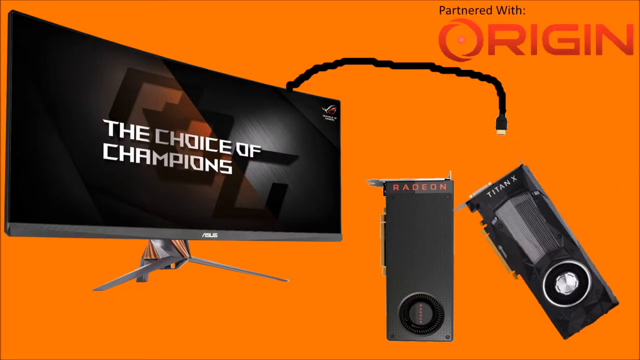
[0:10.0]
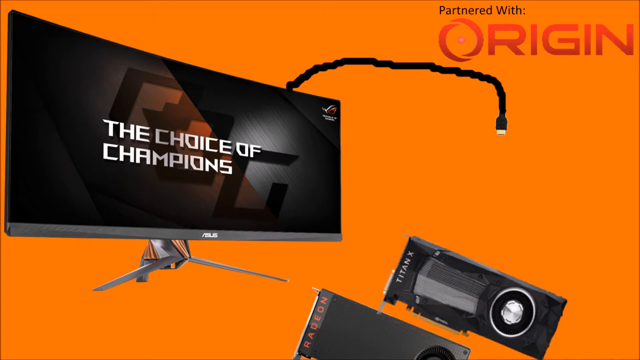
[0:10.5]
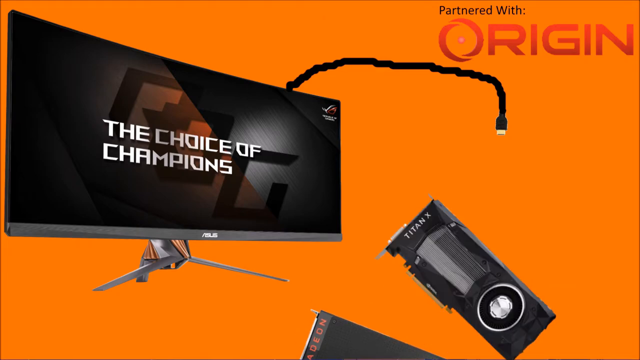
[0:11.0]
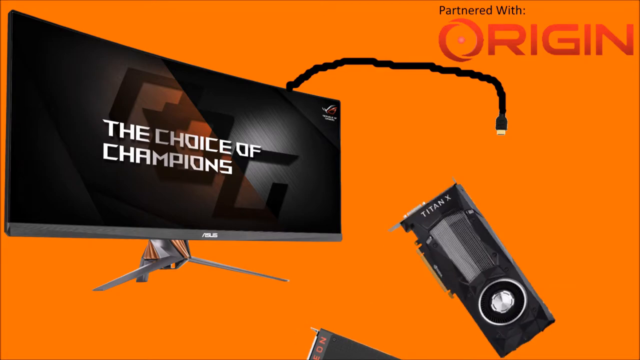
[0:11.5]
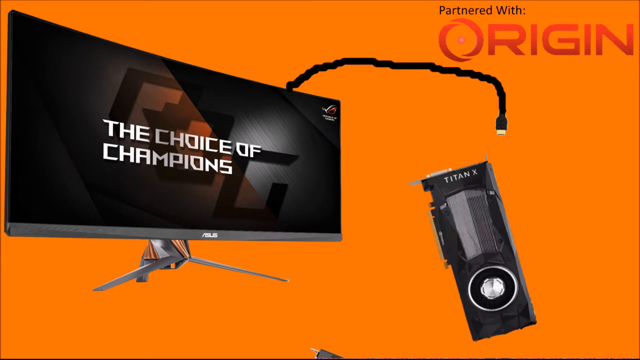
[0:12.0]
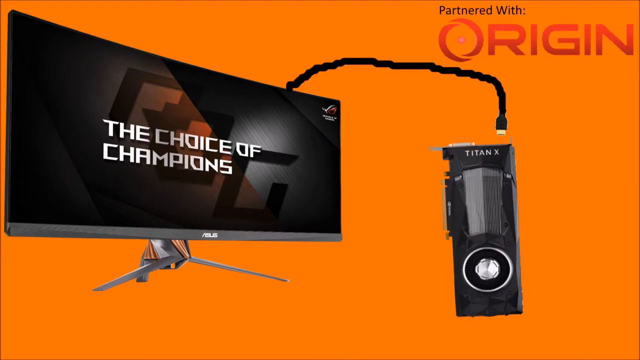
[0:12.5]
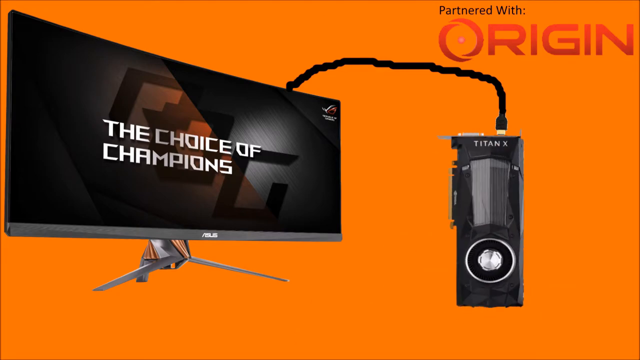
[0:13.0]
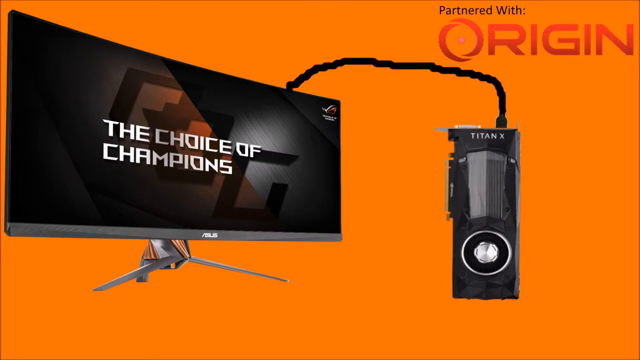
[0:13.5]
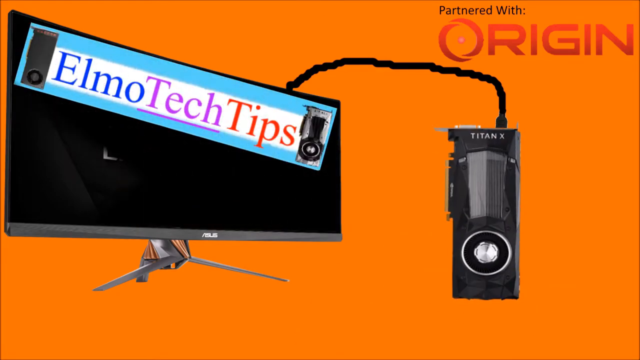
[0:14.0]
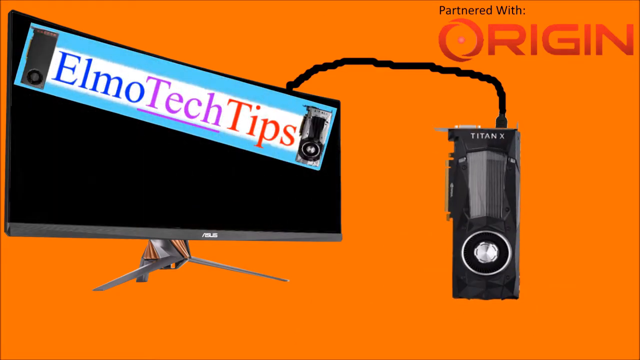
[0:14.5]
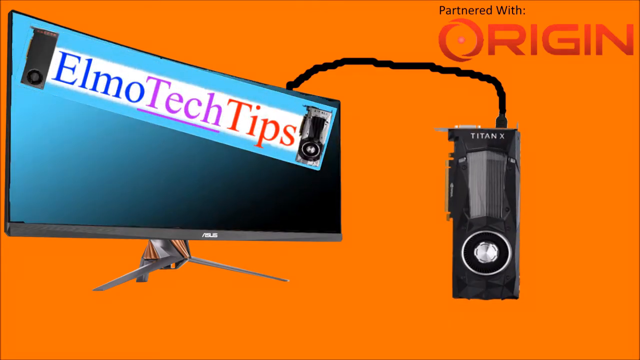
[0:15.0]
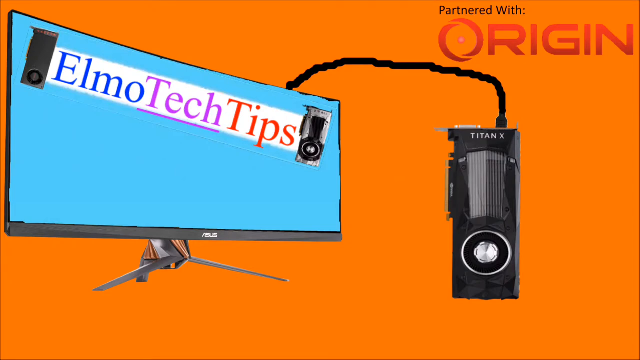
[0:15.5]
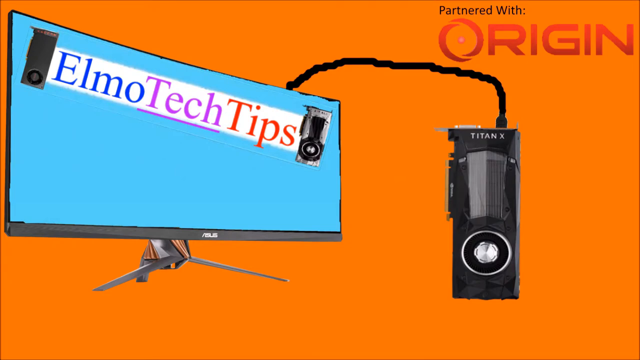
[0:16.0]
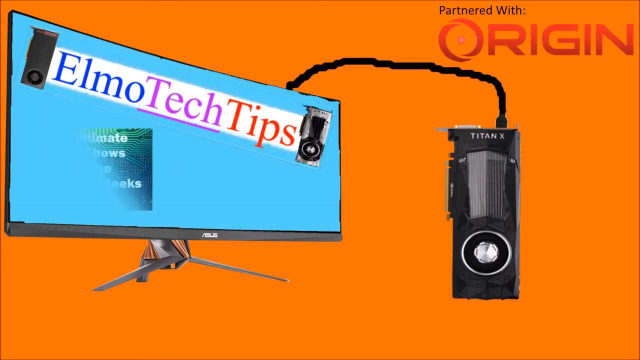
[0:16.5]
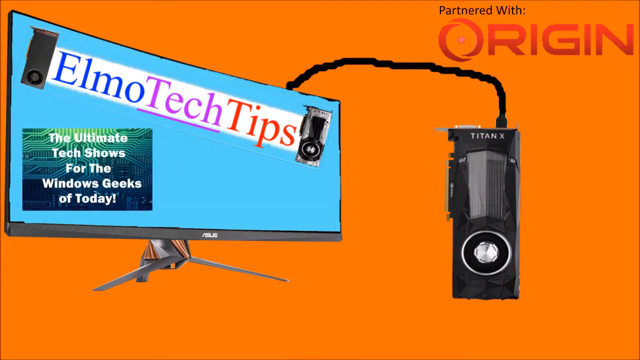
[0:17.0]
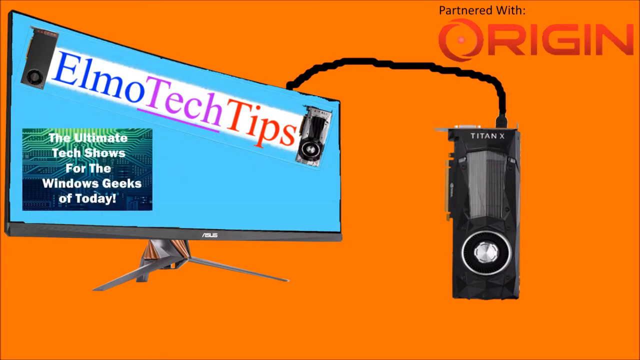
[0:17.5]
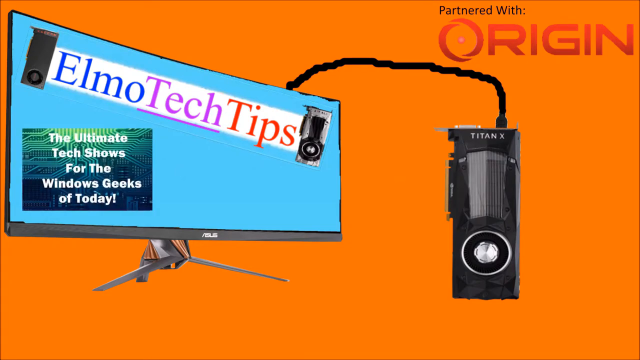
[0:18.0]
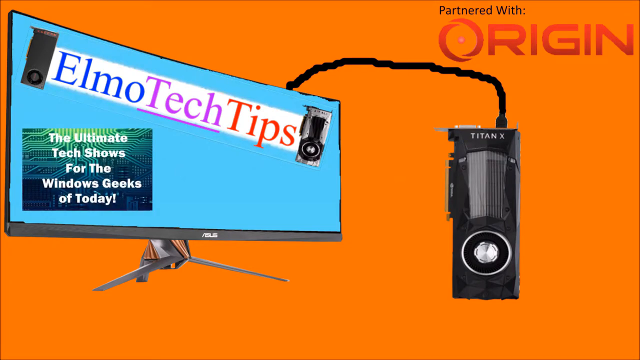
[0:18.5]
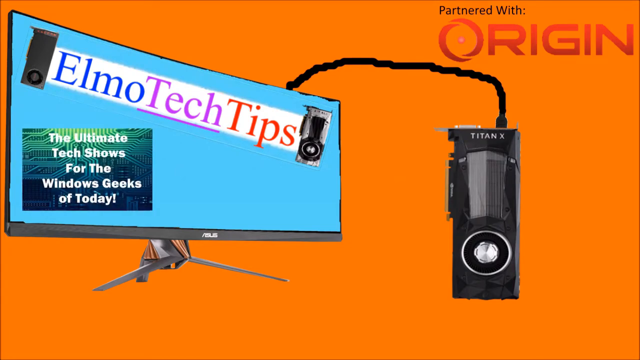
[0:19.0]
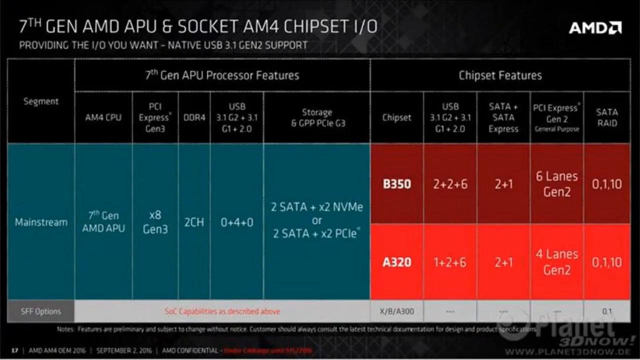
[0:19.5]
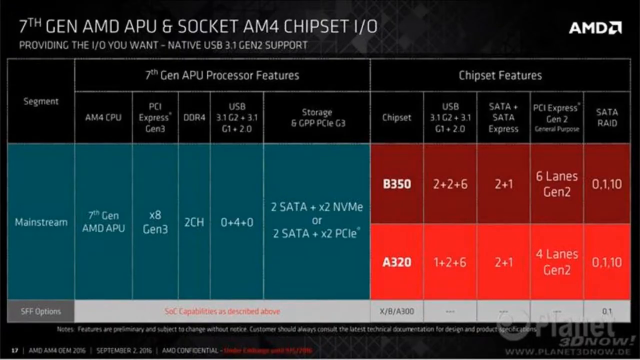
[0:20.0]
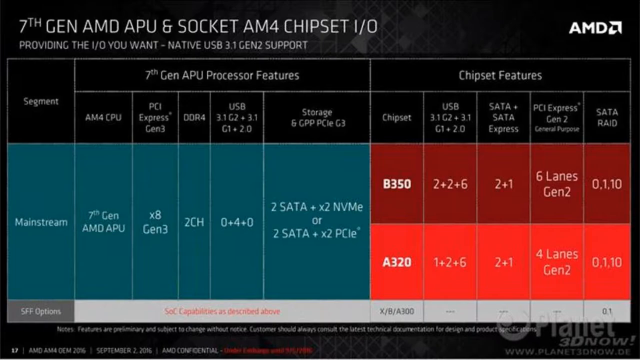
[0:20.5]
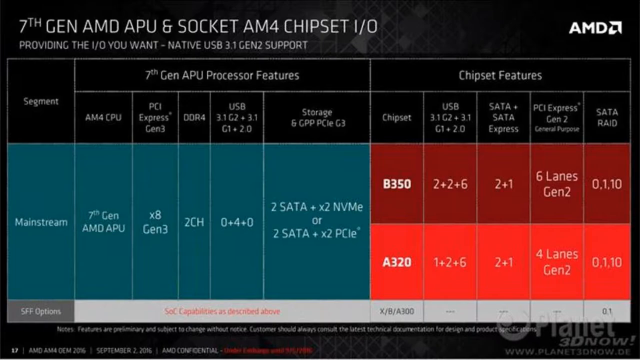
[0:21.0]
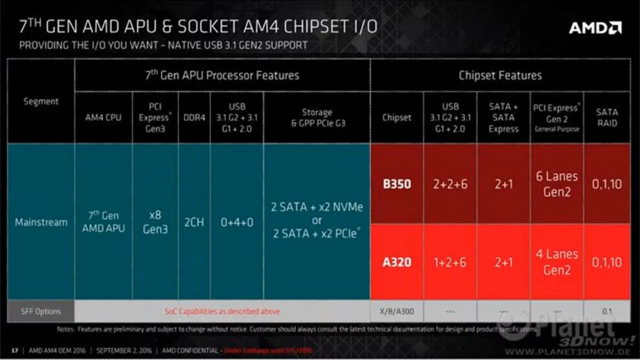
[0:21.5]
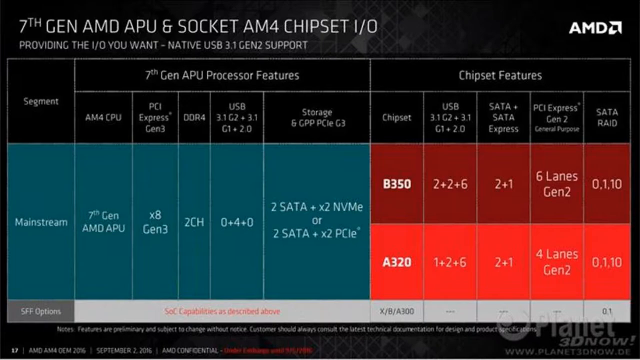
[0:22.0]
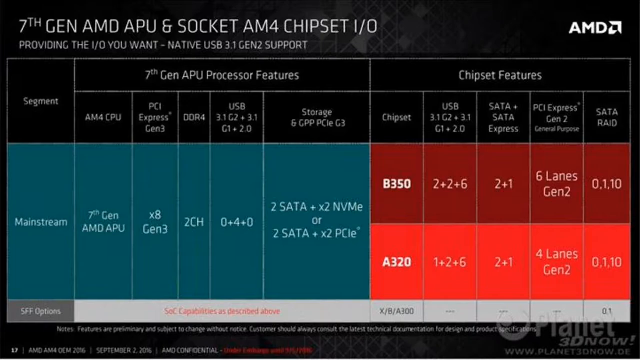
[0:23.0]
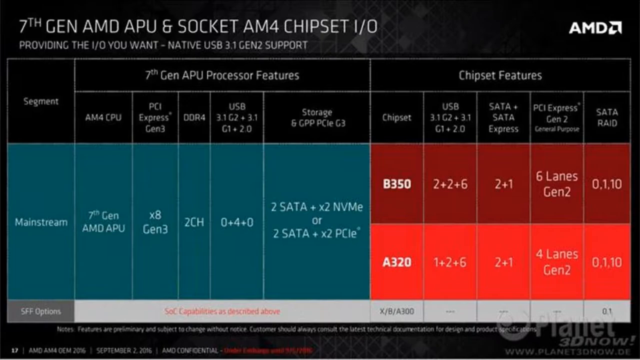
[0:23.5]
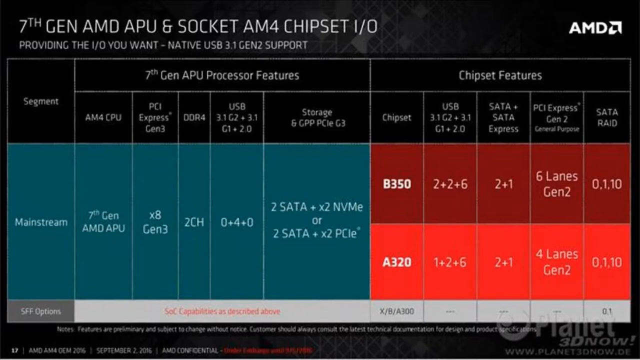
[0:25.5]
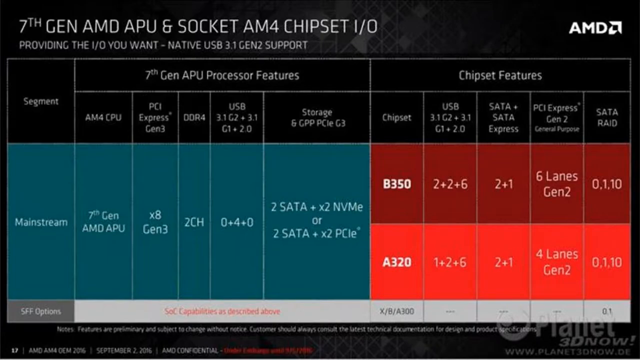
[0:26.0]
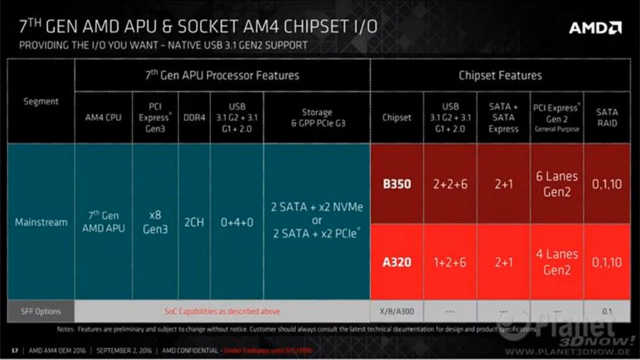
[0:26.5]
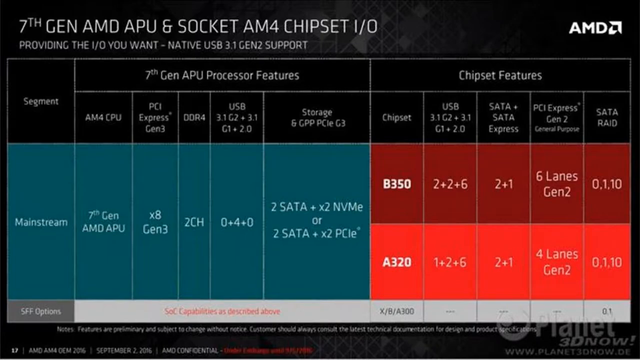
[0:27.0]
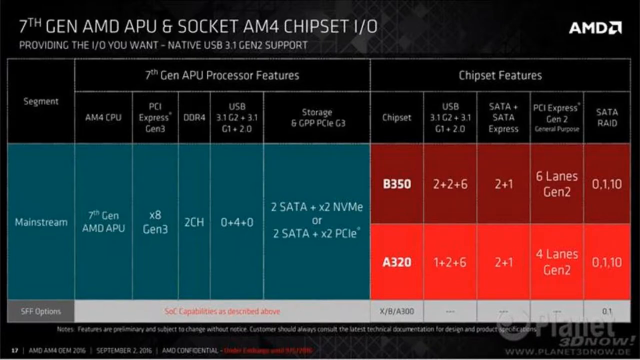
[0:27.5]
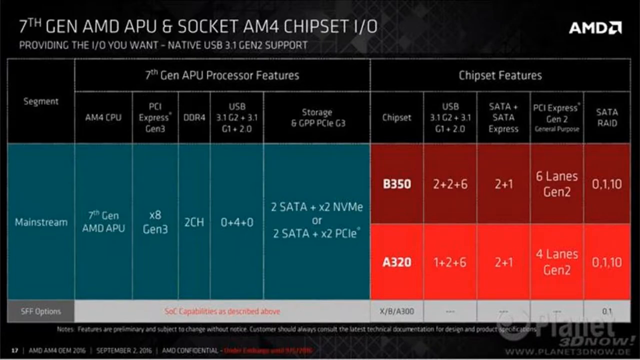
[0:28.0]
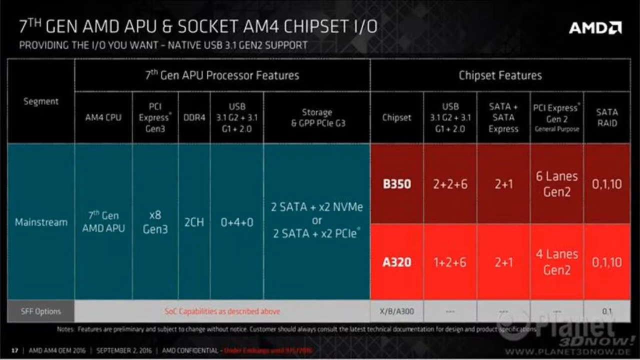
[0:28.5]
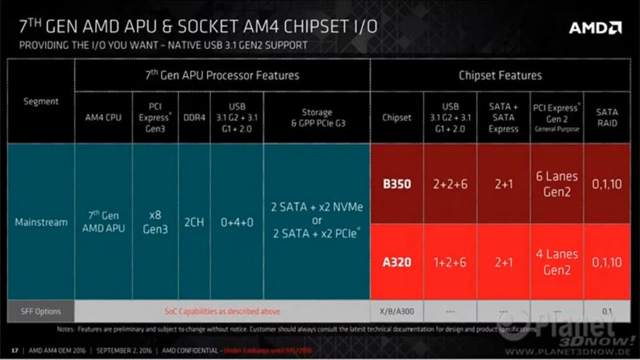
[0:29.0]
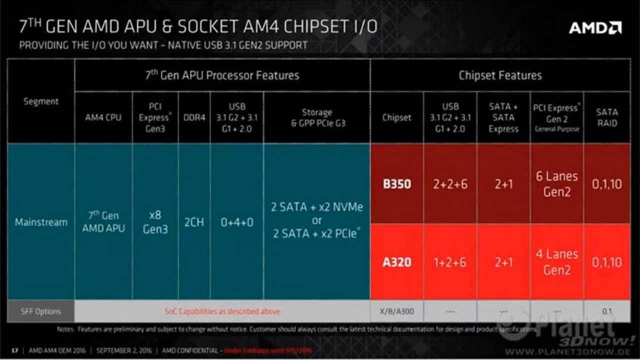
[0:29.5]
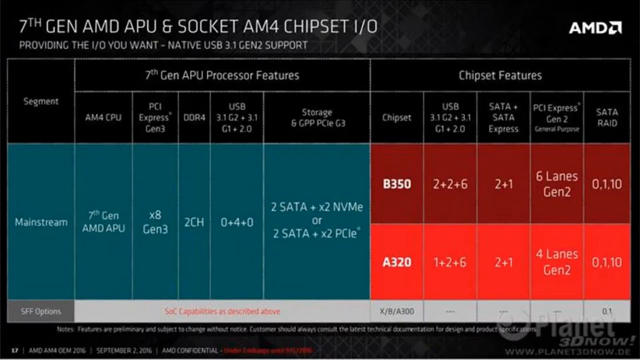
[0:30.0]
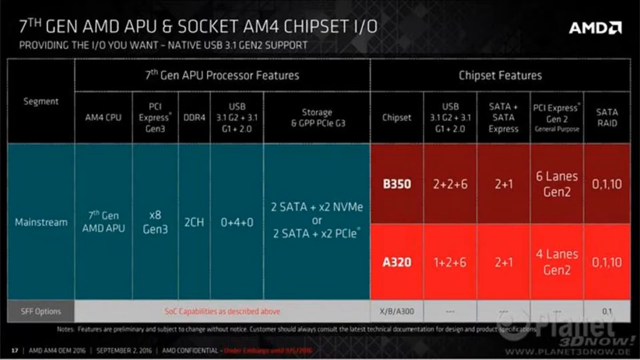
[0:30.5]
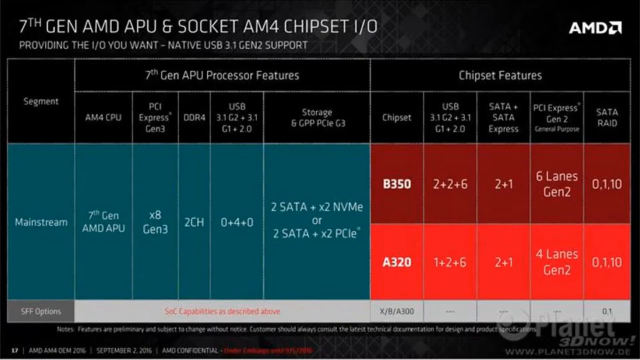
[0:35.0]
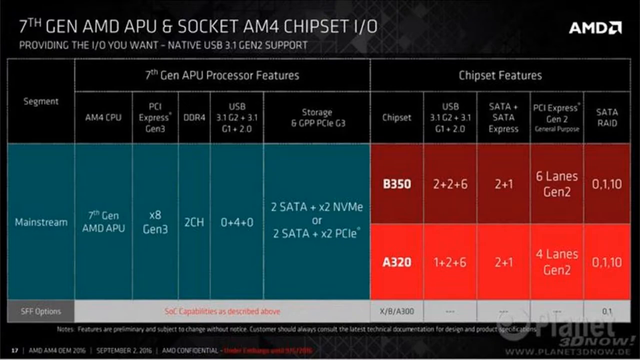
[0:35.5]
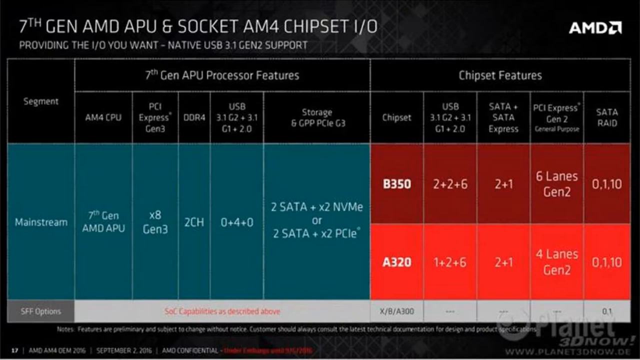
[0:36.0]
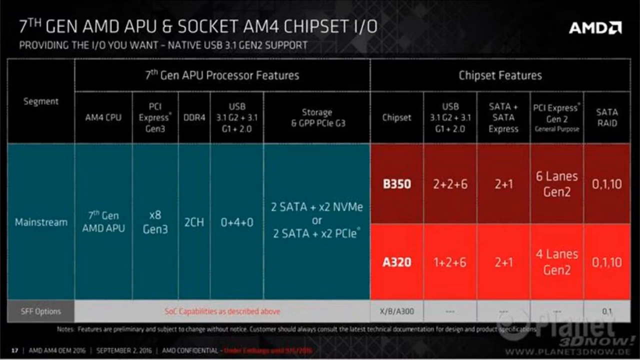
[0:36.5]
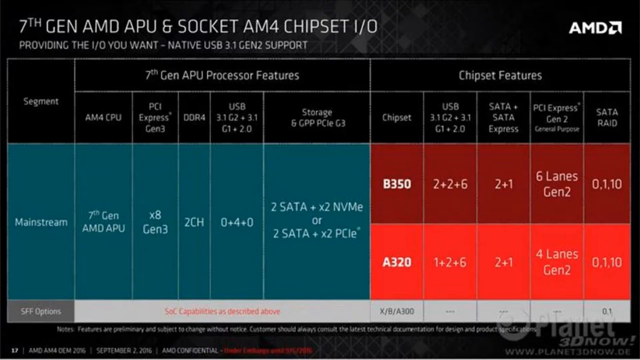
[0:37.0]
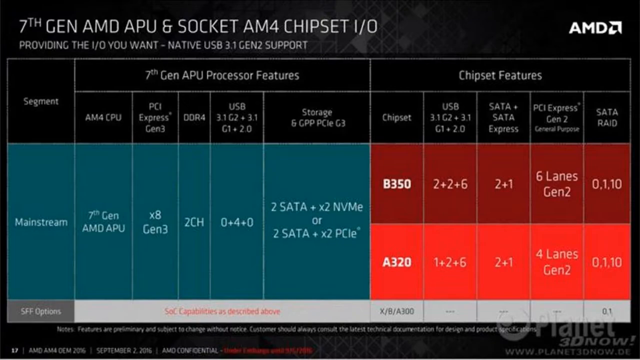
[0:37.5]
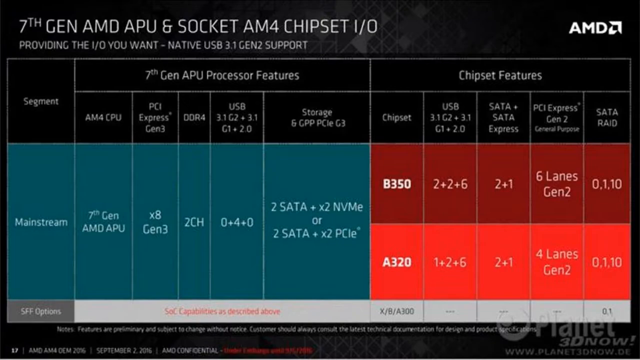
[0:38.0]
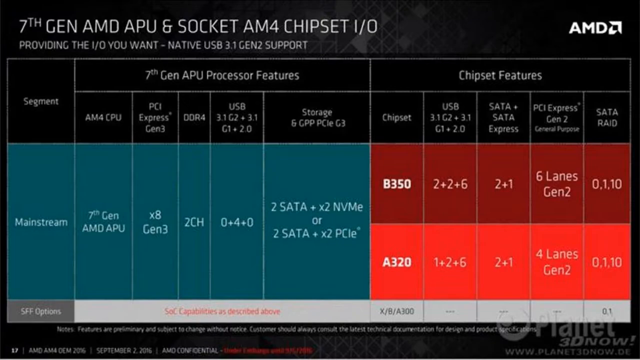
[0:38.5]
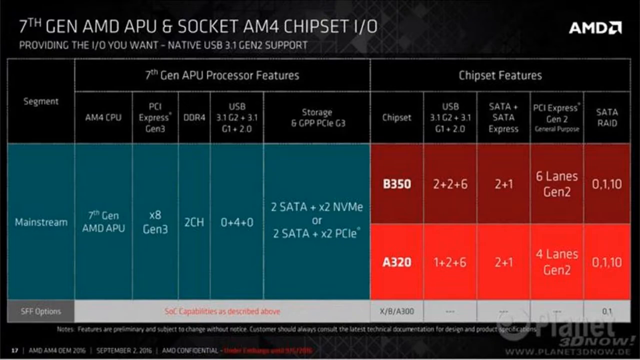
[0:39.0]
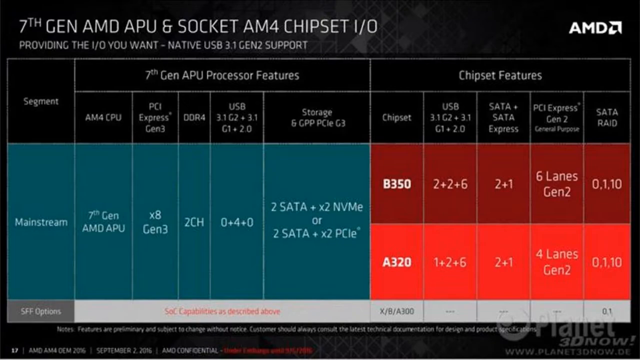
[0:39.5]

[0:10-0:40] The screen with the Asus monitor has an HDMI cable going out of its top. The Titan X video card on the right eventually moves toward the cable and gets connected. Text appears reading "Elmo Tech Tips," written as one word, and below it, "the ultimate tech show for Windows geeks of today." A new screen then shows a specifications table for a 7th gen AMD APU and socket AM4 chipset I/O, with information about generation, PCI, and chipset features. It lists 2-channel DDR4, support for 2 SATA plus 2 x2 NVMe or 2 x2 PCIe, and chipsets B350 or A320. The table's headers include AM4 CPU, PCI Express Gen3, DDR4, USB3, storage, chipset, USB 3.1, SATA + SATA Express, PCI Express Gen 2 (how many lanes), and SATA RAID. The first group, for features, is in blue, and the chipset features are in red.